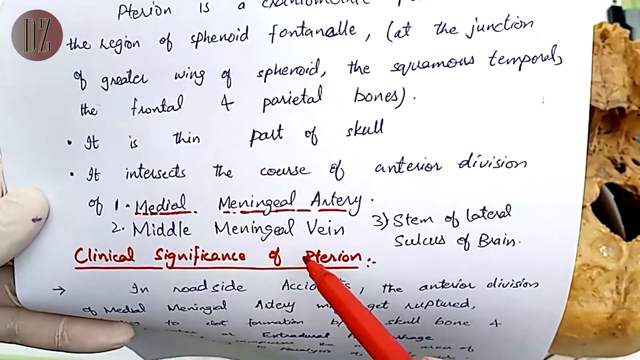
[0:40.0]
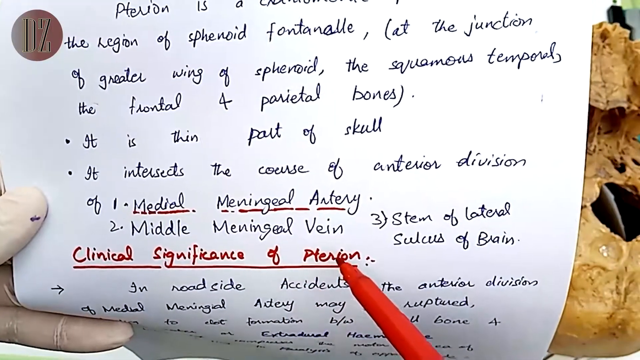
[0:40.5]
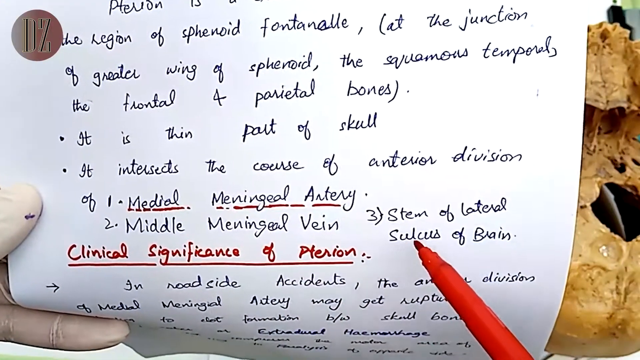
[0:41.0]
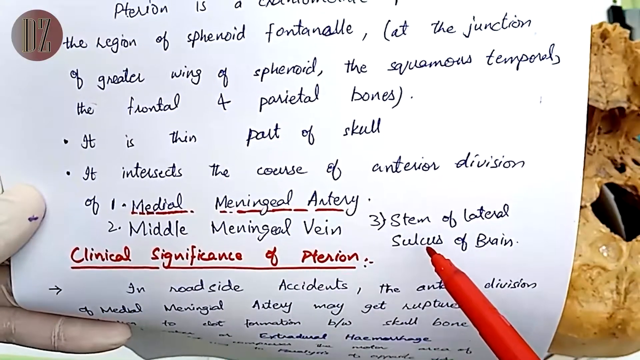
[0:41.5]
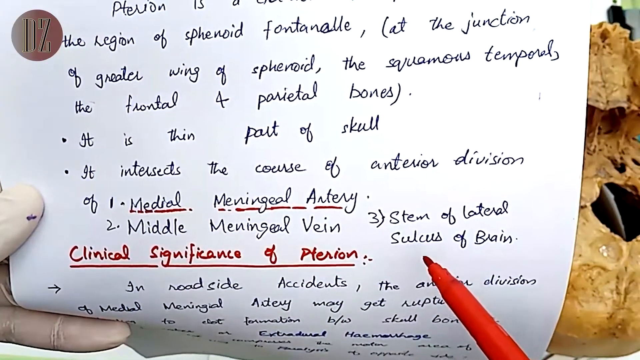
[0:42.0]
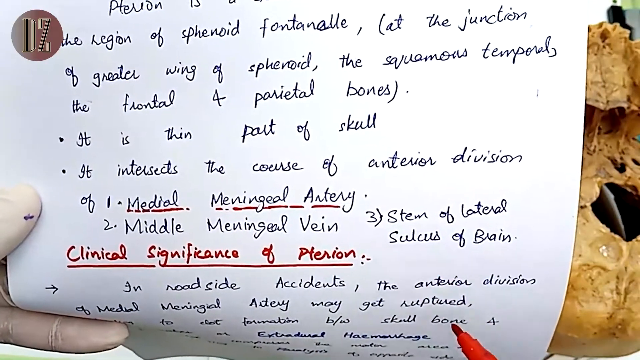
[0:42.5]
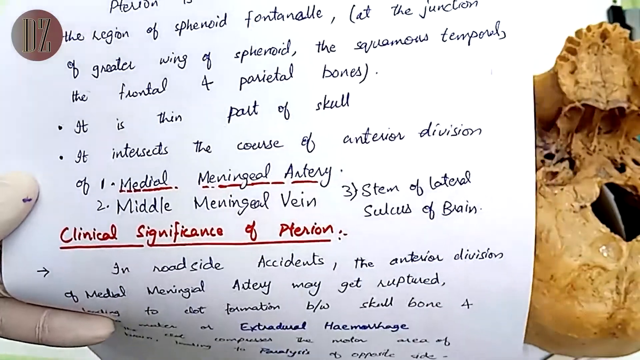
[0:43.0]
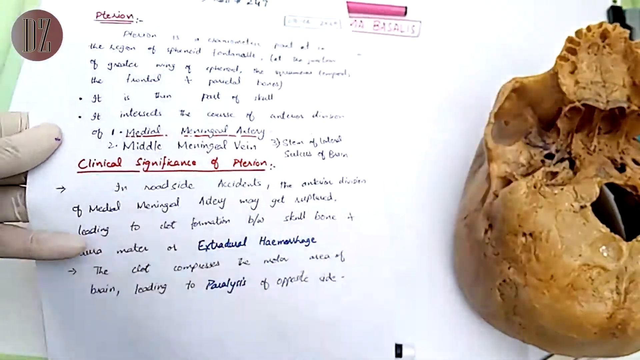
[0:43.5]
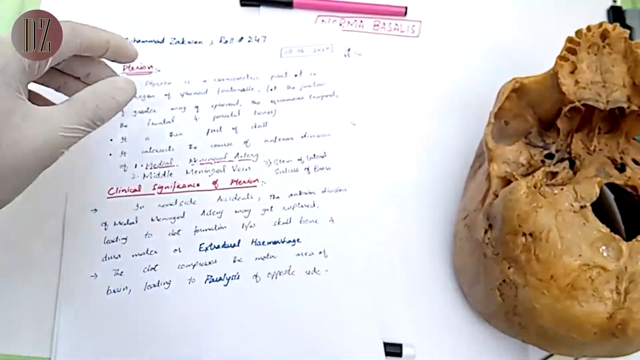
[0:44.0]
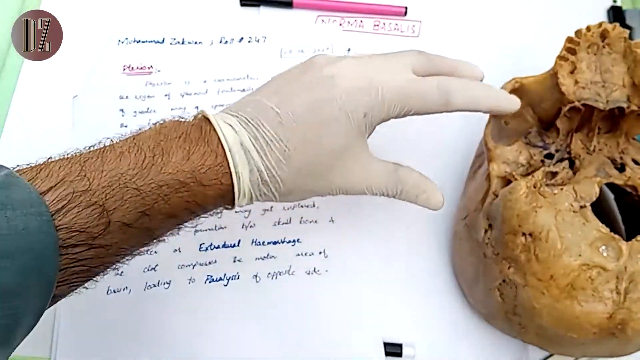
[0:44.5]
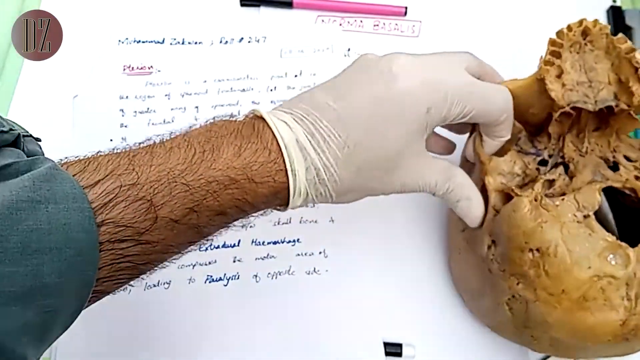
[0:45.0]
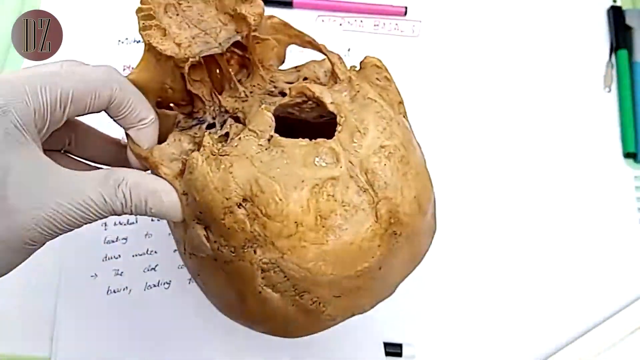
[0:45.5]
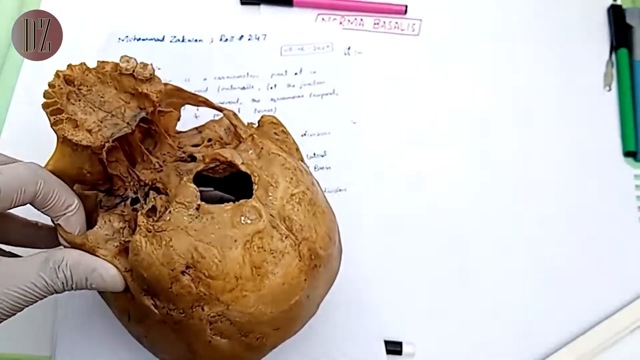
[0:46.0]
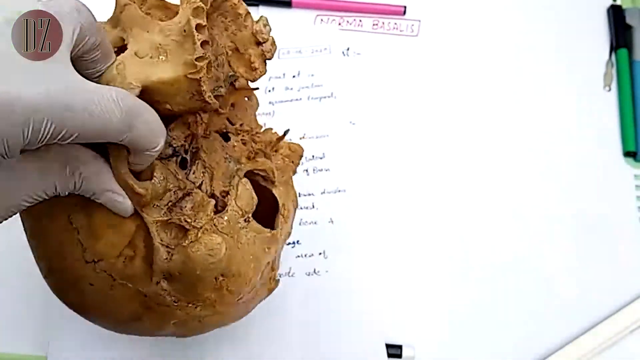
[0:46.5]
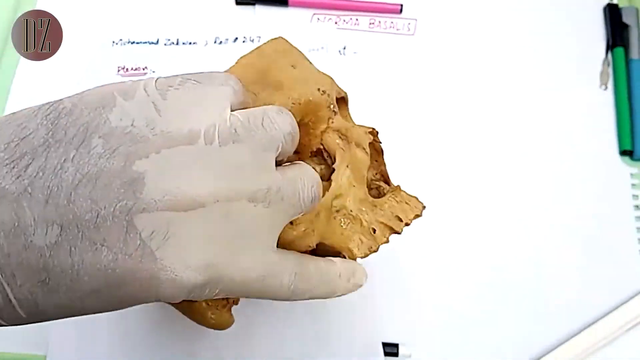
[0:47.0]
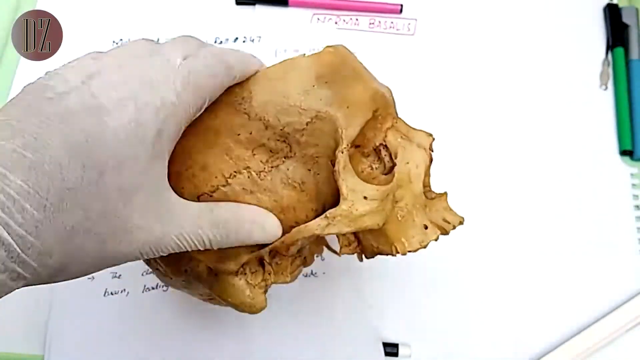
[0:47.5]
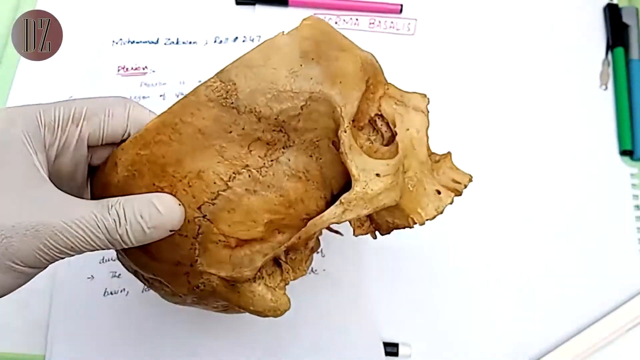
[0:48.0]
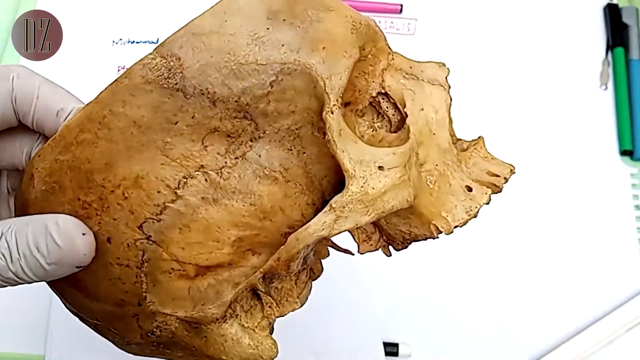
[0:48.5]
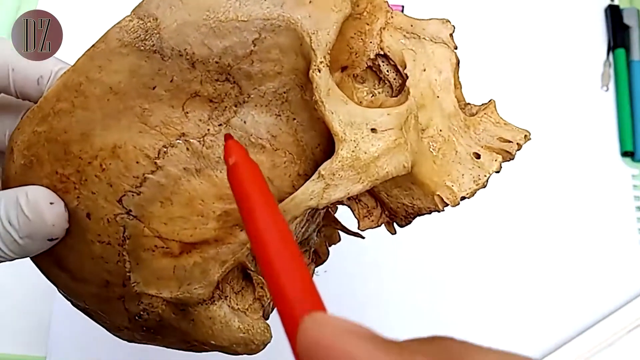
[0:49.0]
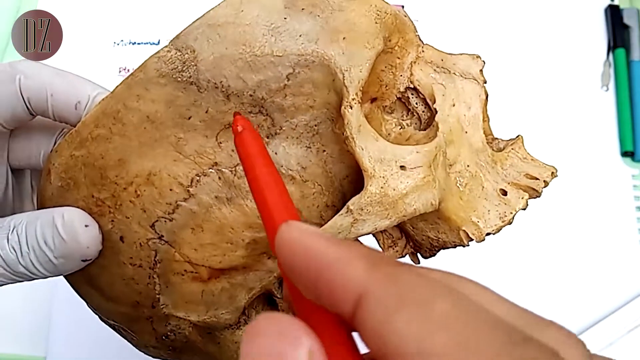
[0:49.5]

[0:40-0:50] A close-up shows a white piece of paper with no lines and no holes for a notebook. It has black writing in a mixture of print and cursive, as well as red marker writing. The words "medial meningeal artery" are underlined with the red marker, and below that, in red marker, is "clinical significance of pterion", also underlined in red. In the upper left-hand corner appears to be a seal or logo: a circle containing the capital letters D and Z, which looks like a coin, like a copper penny. A person moves the red marker across the page as if reading the text. They then put the paper down onto a table top, and a human skull is visible next to it. The person picks up the skull with their surgical-gloved left hand and makes a circular gesture with the red pen at the temple of the skull.